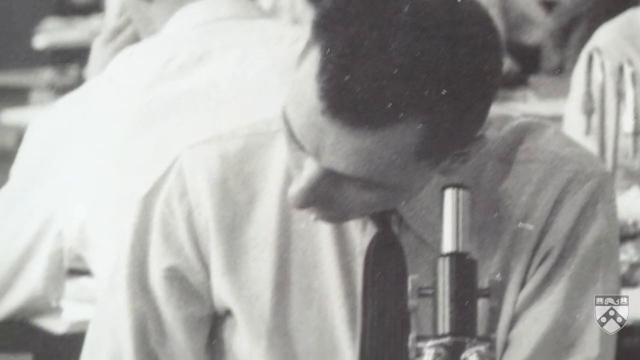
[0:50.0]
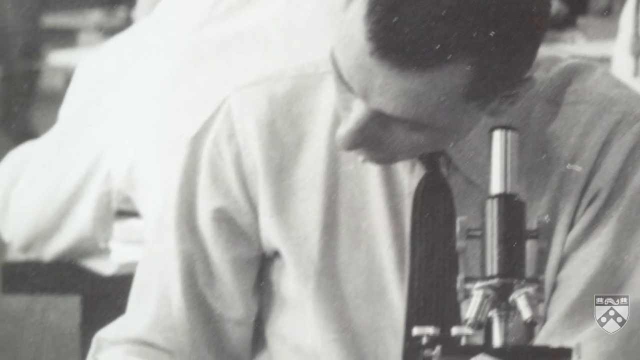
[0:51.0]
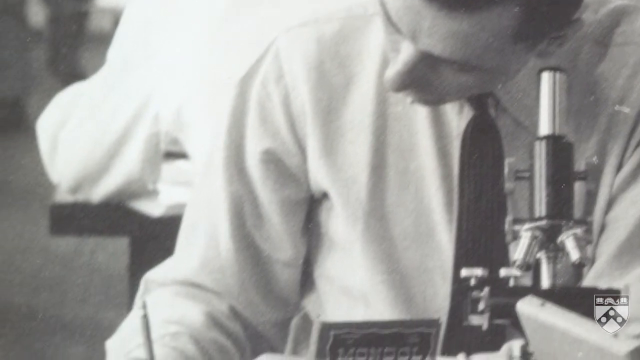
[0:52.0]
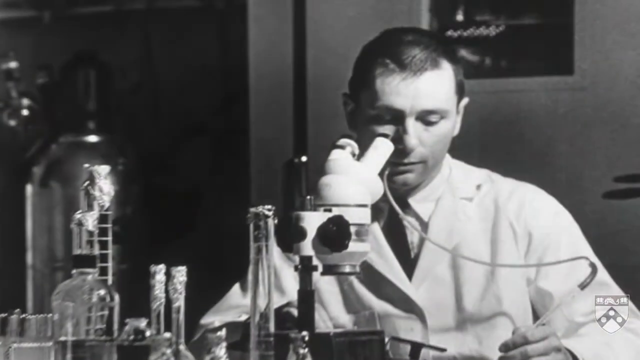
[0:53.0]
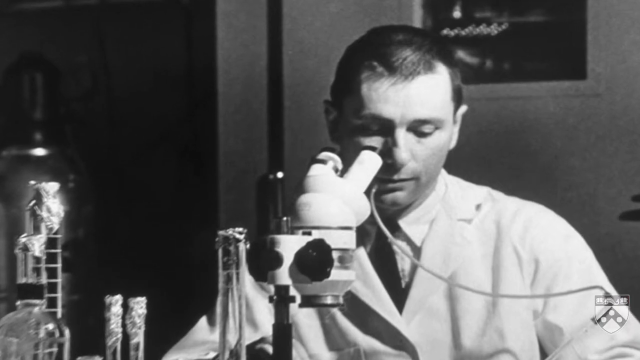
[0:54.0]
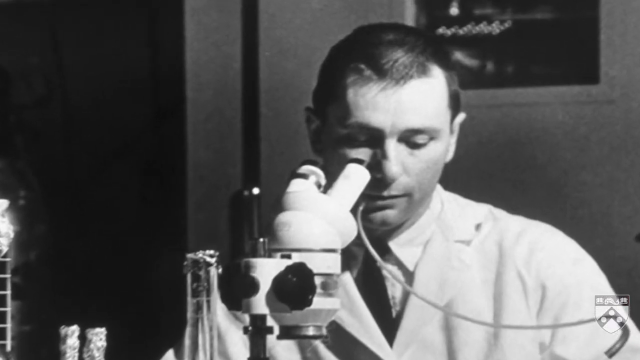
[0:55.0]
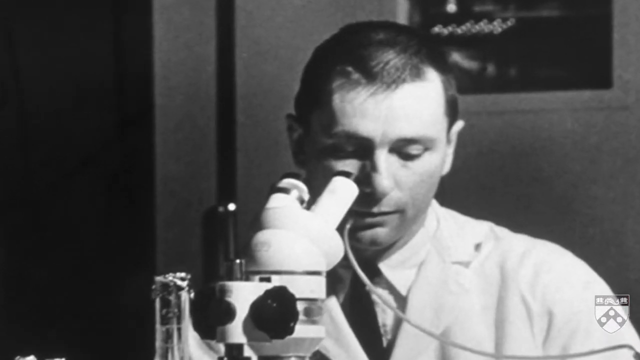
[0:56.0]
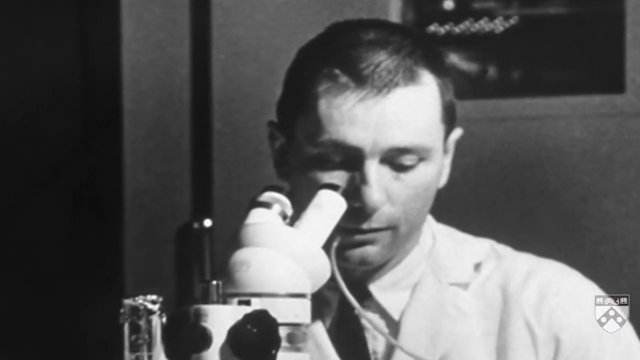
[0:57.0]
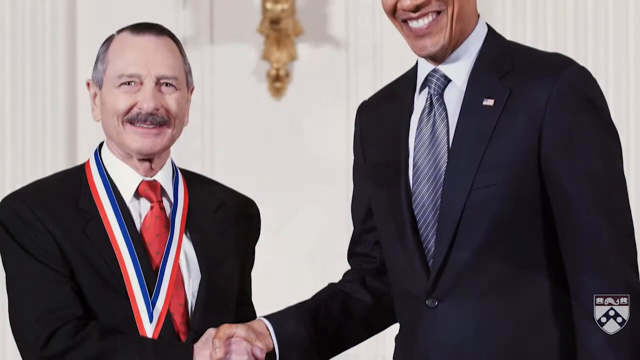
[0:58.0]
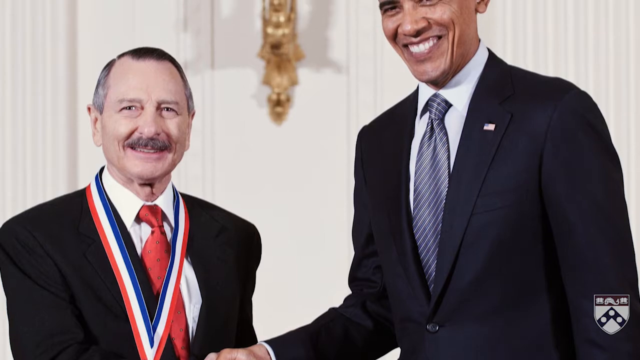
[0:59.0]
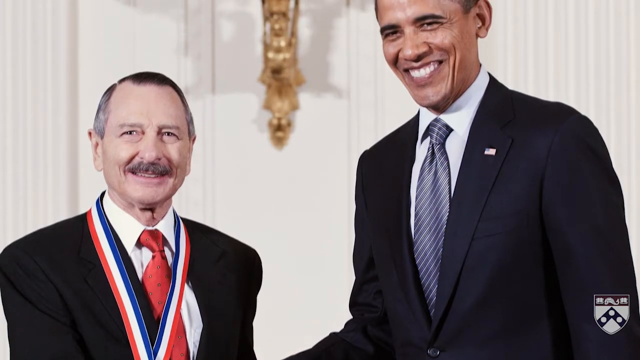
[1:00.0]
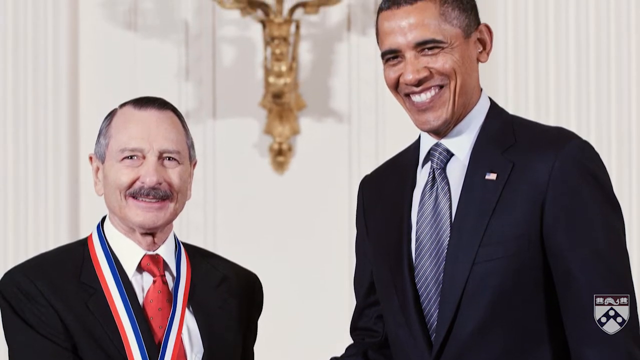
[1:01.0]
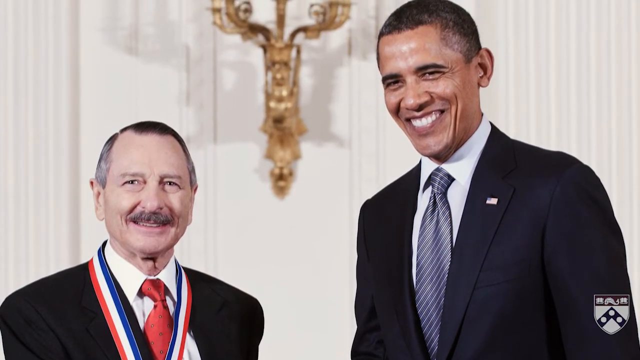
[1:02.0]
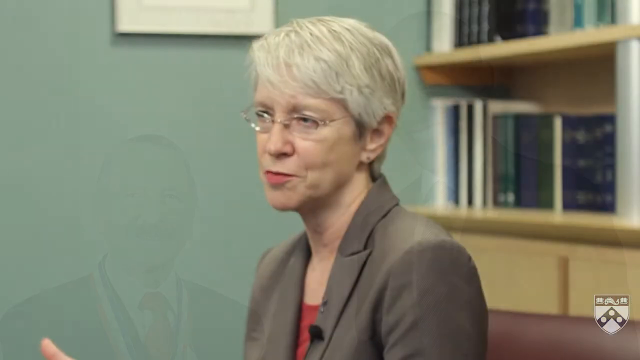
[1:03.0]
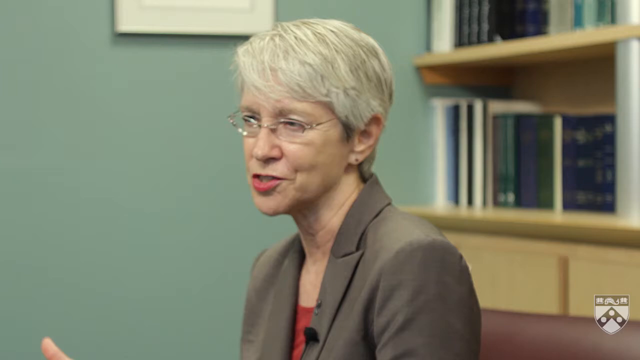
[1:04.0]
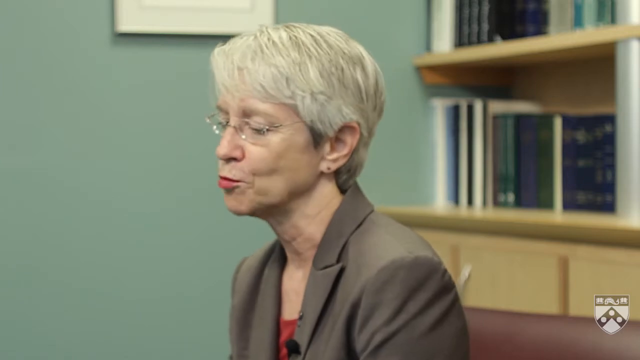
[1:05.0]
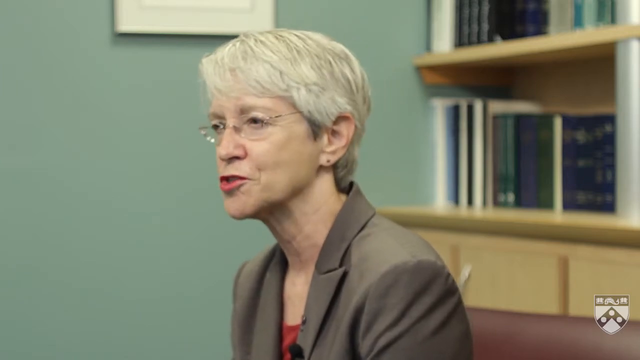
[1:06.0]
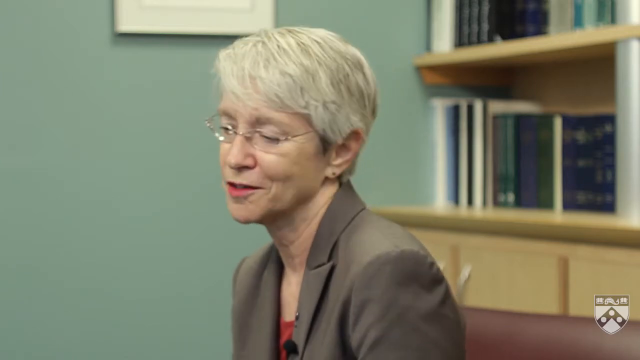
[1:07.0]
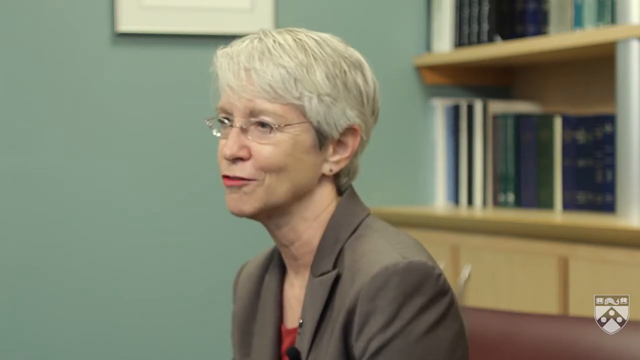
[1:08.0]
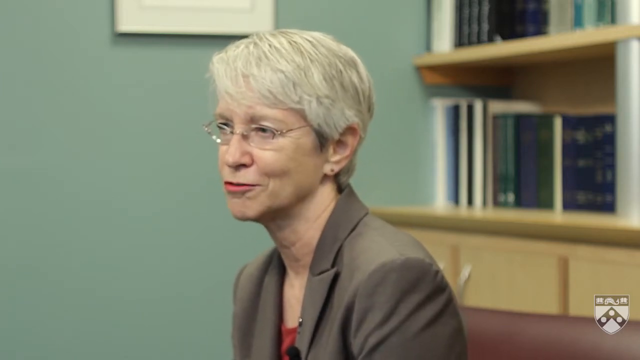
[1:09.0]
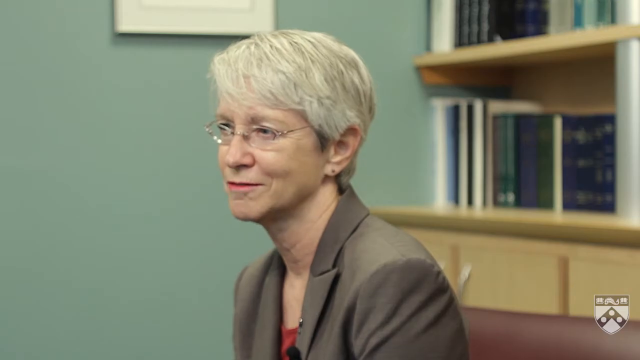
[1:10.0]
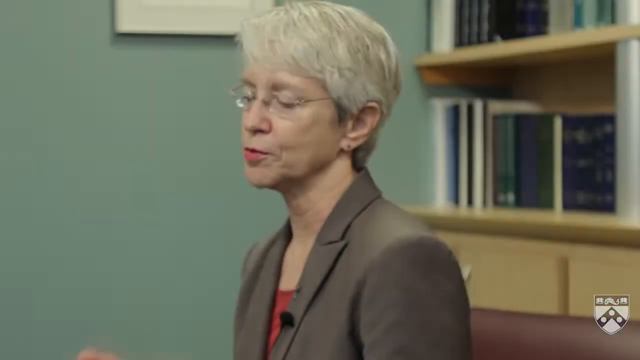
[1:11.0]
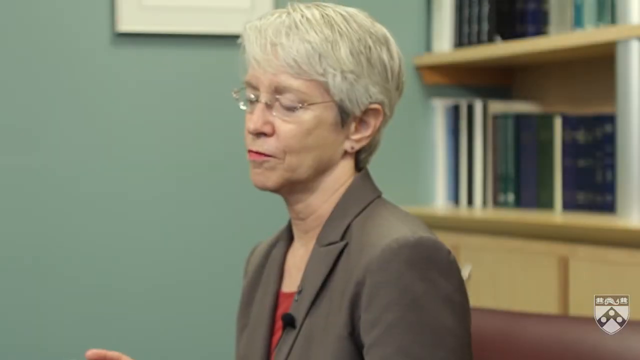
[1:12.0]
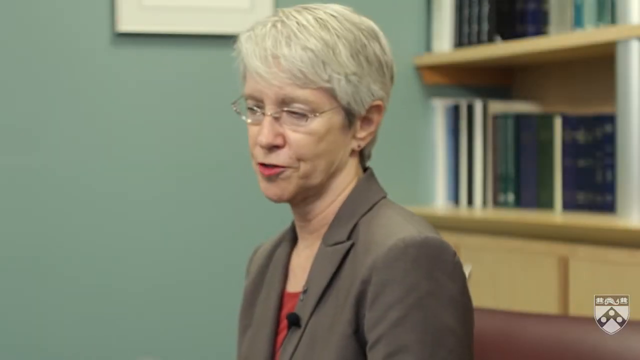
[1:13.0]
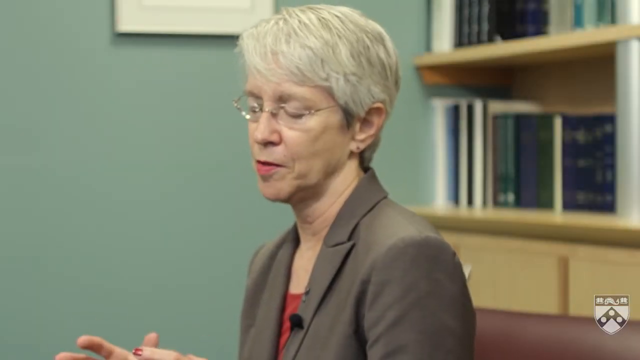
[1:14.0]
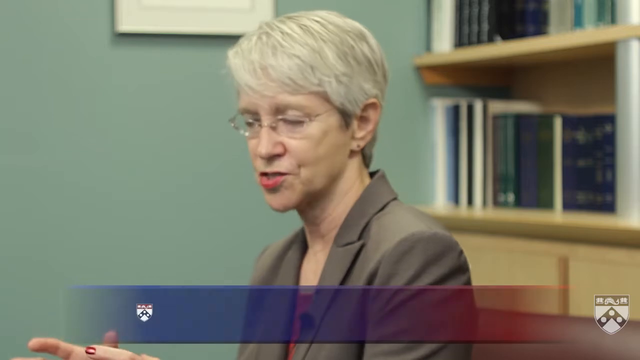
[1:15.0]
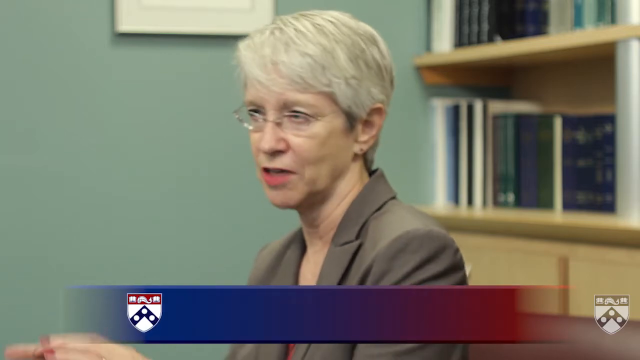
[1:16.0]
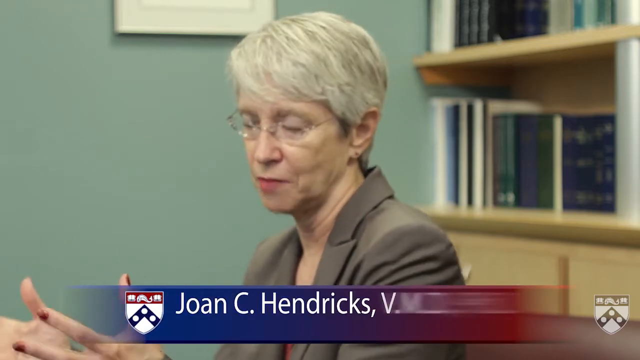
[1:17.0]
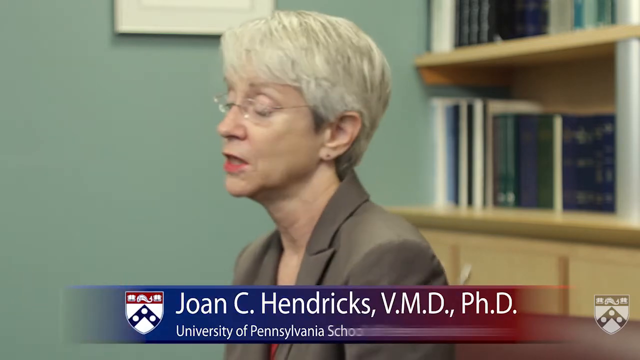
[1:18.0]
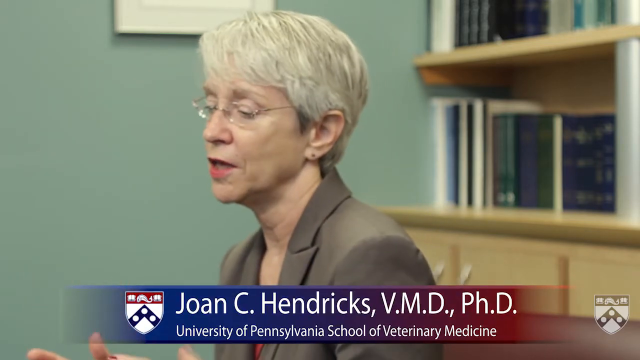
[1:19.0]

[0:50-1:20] A man is shown in black and white with a microphone or microscope in front of him, followed by another man with a microscope in front of him. President Barack Obama then stands with another man at his right, who appears on the left side of the picture. The video returns to a woman being interviewed, and her name appears: "Joan C. Hendricks," "VMD, PhD" and "University of Pennsylvania School of Veterinary Medicine." She is in front of a desk or books in her office. As she talks, her grayish-blonde hair with a little white mixed in is visible.